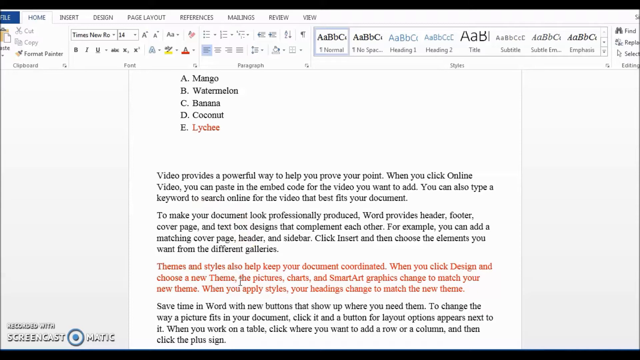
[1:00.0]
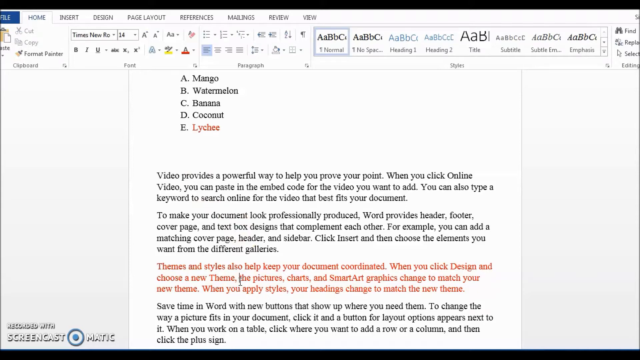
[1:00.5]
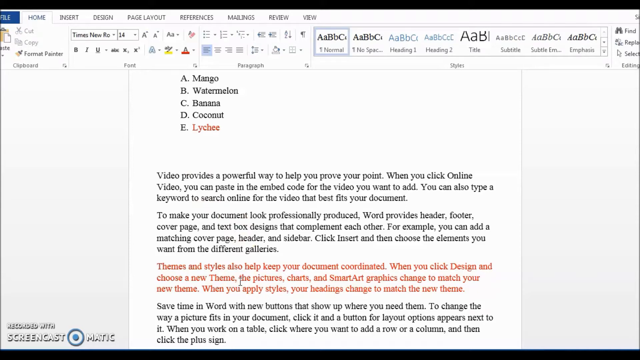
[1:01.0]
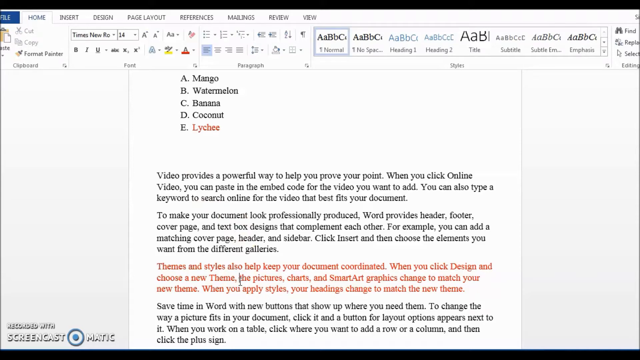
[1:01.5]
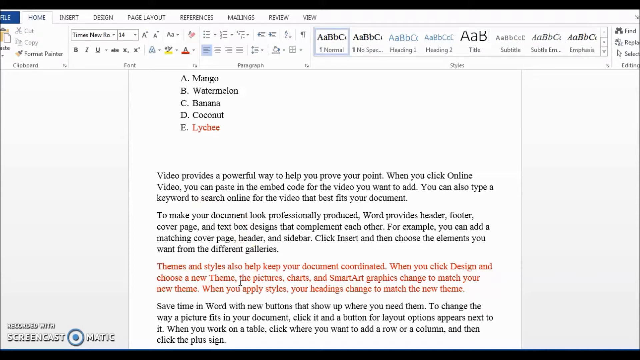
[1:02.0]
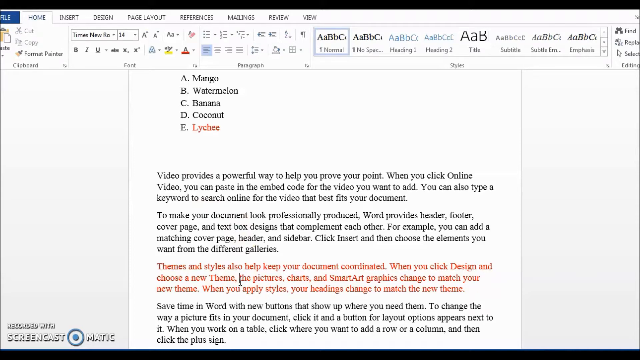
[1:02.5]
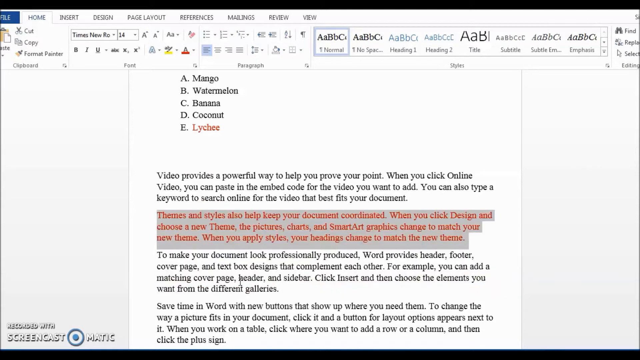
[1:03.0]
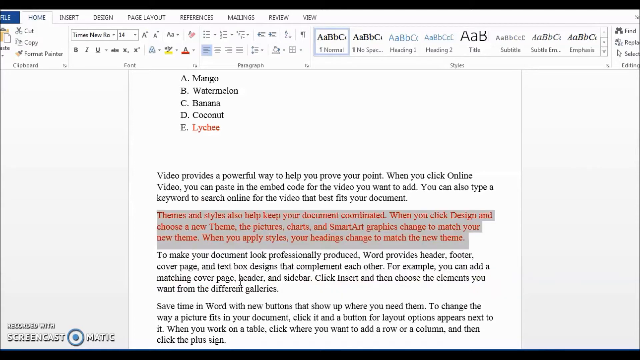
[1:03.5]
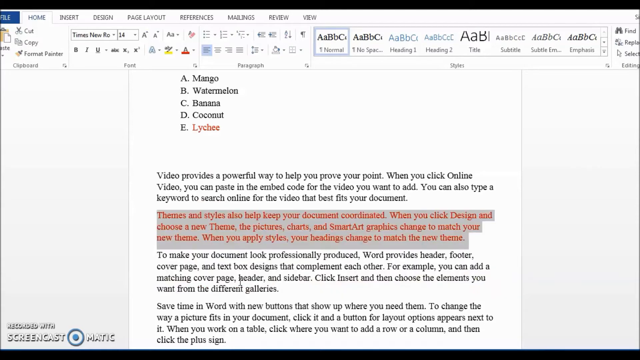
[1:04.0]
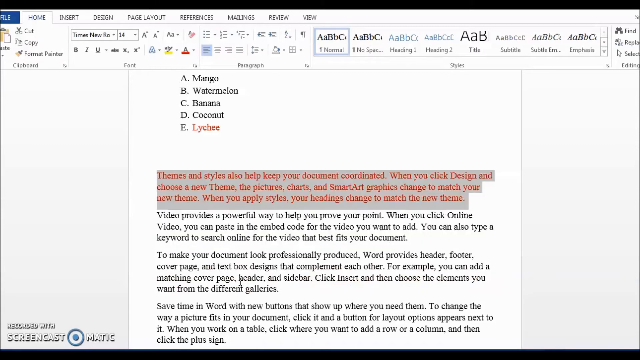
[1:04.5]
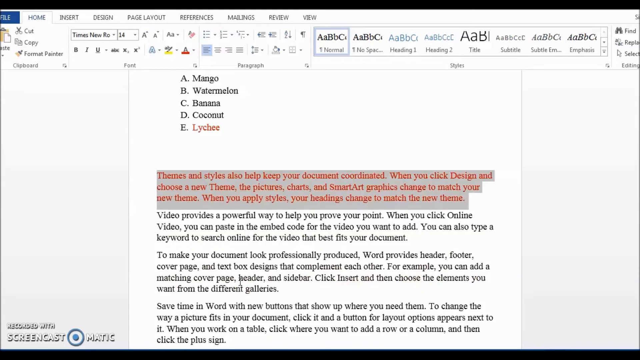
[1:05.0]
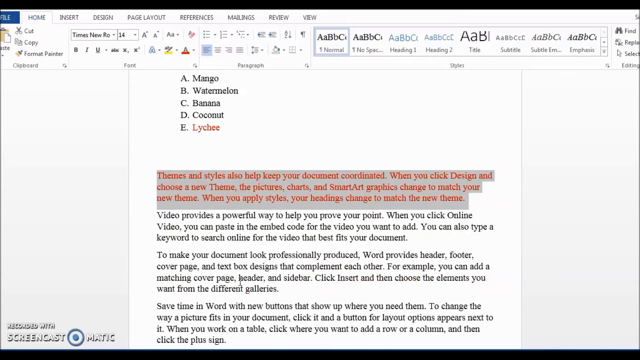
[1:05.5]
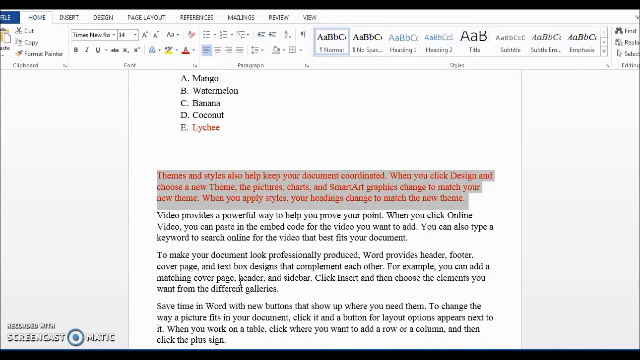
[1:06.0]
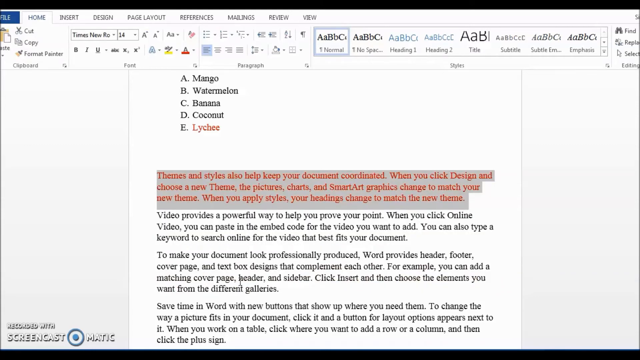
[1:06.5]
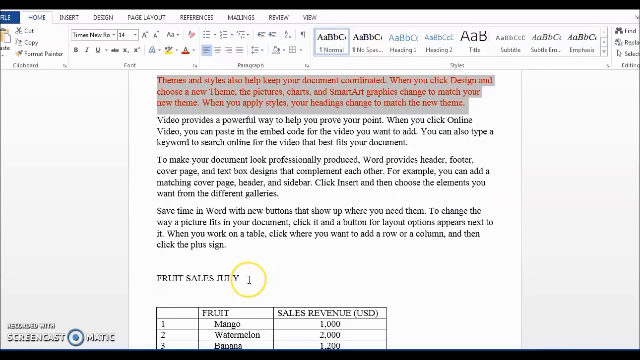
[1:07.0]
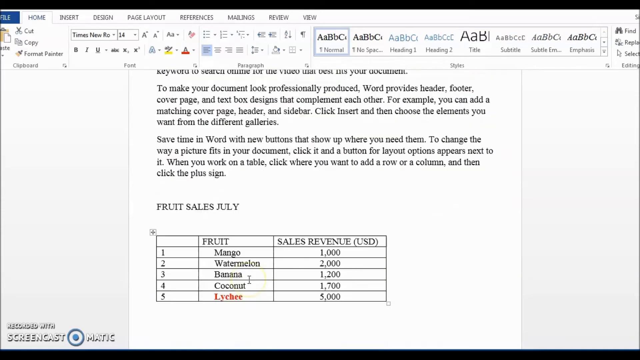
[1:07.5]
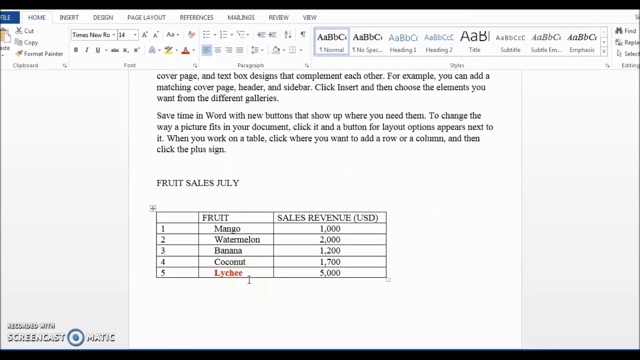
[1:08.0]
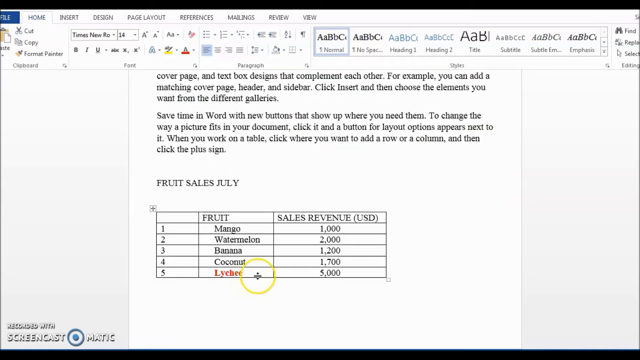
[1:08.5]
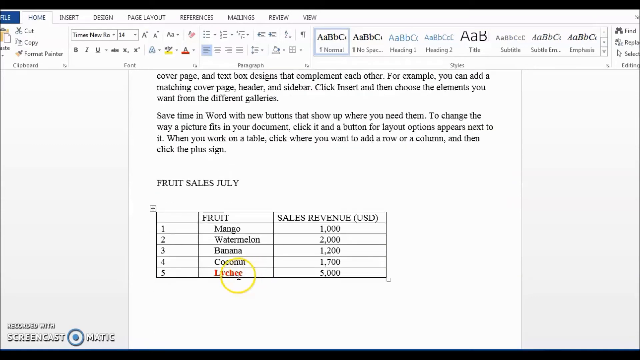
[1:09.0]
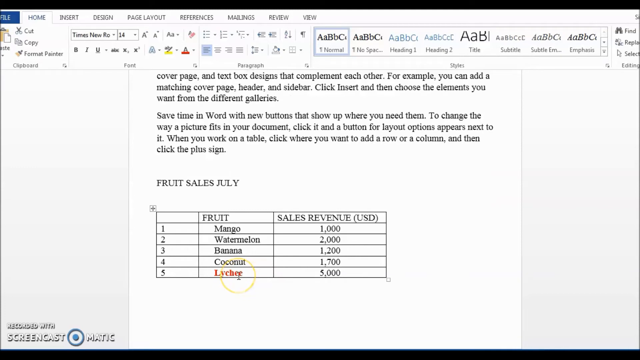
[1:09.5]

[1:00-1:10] The view jumps, and the document text reads "Save time in Word with new buttons that show up where you need them to change the way a picture fits in your document. Click it, and a button for Layout Options appears next to it." Further text reads "When you work on a table, click where you want to add a row or a column, and then click the plus signs." Below is a table titled "Fruit Sales, July": the first row is mango with sales revenue $1,000, the second watermelon with $2,000, the third banana with $1,200, the fourth coconut with $1,700, and the fifth lychee with $5,000.